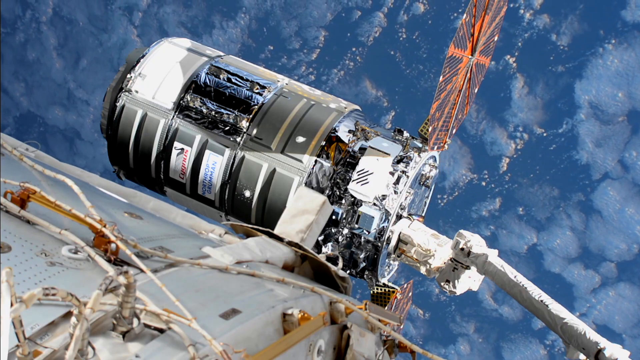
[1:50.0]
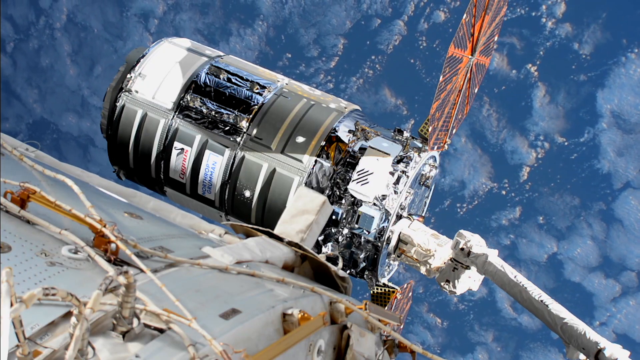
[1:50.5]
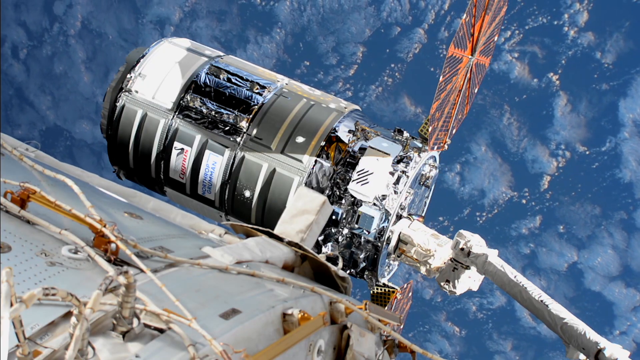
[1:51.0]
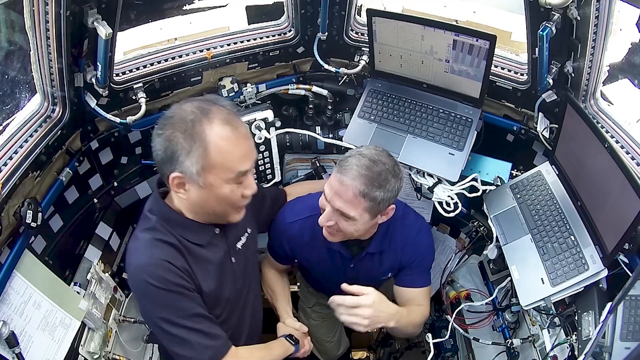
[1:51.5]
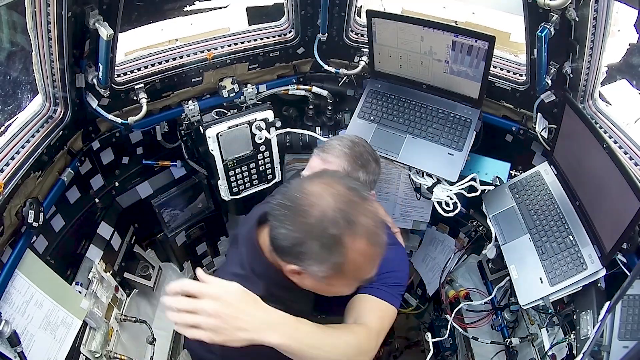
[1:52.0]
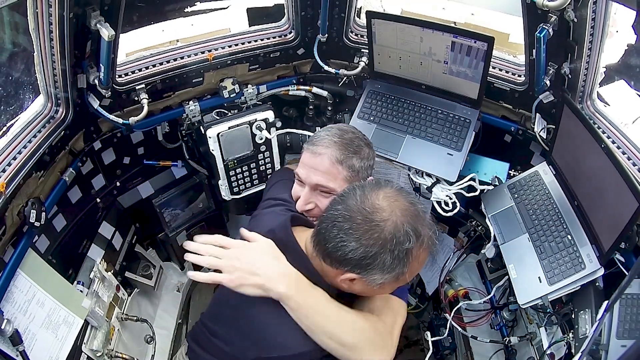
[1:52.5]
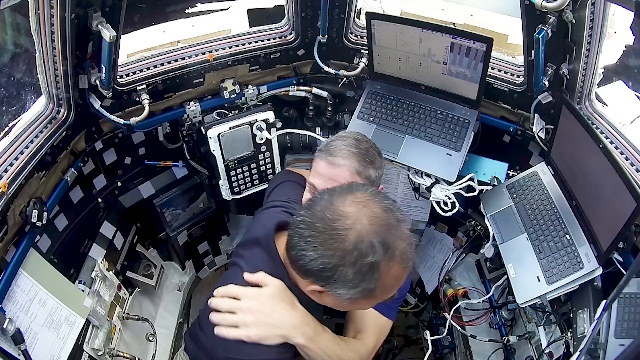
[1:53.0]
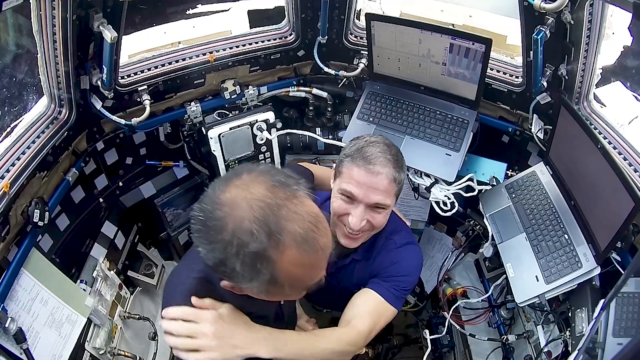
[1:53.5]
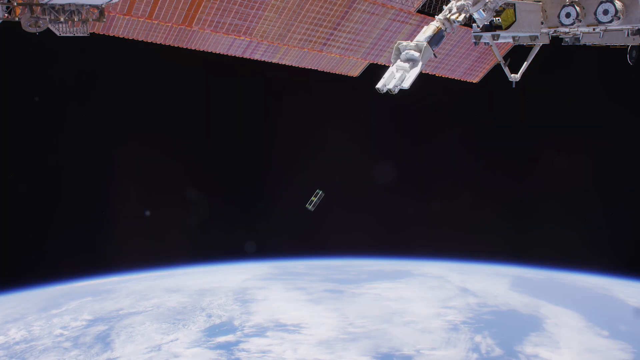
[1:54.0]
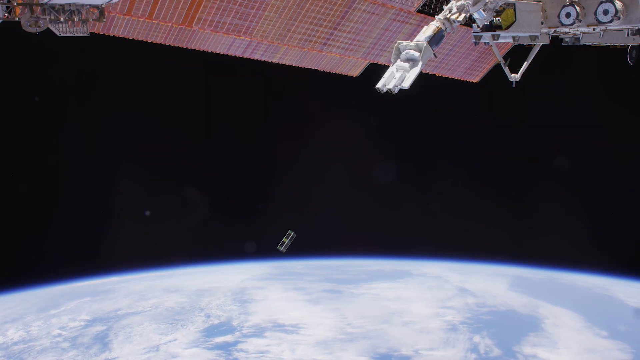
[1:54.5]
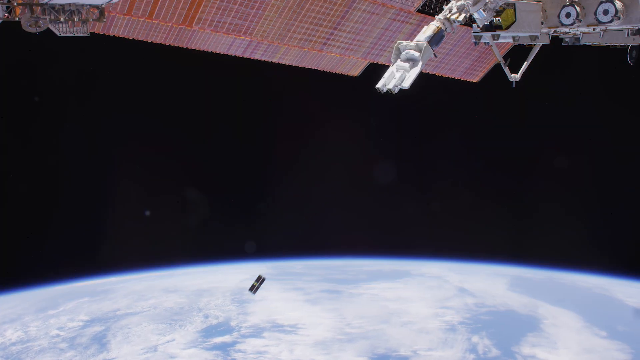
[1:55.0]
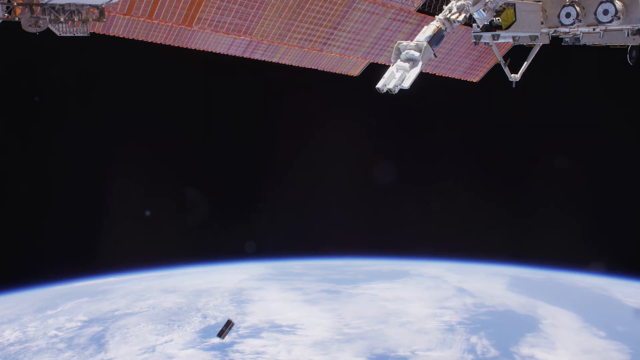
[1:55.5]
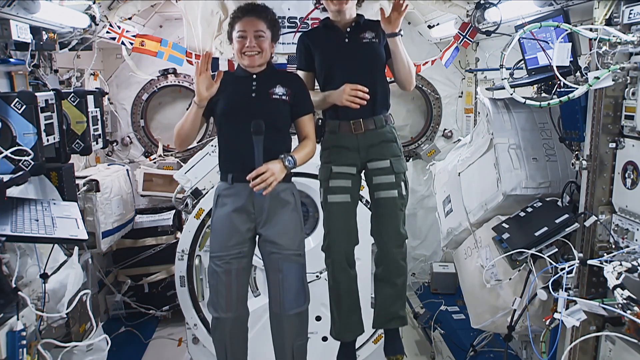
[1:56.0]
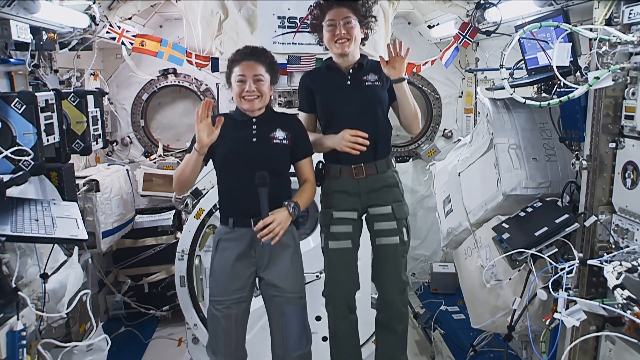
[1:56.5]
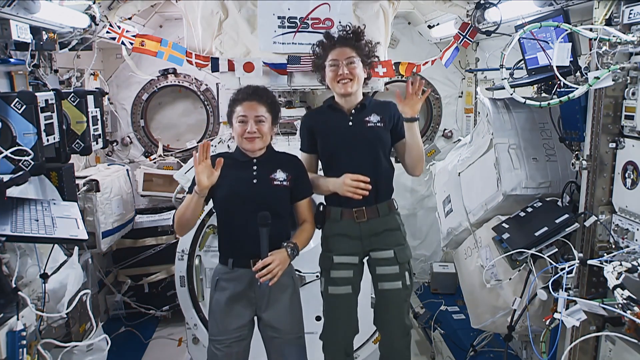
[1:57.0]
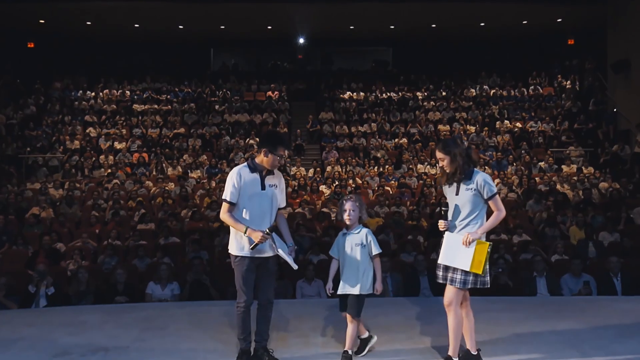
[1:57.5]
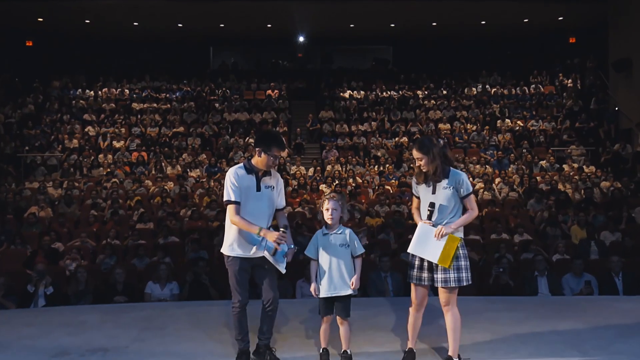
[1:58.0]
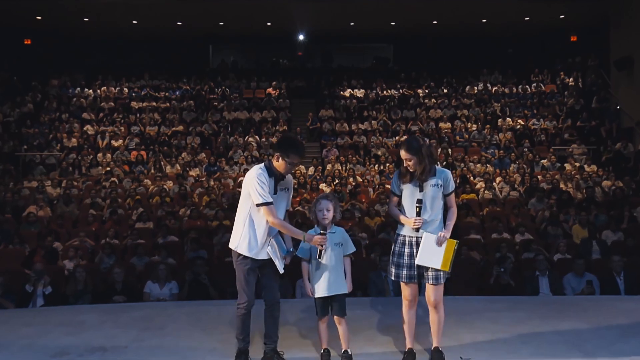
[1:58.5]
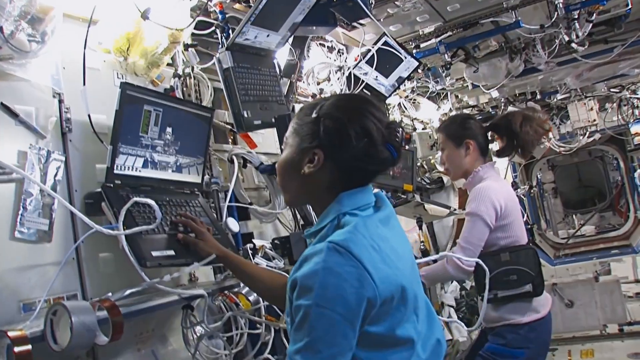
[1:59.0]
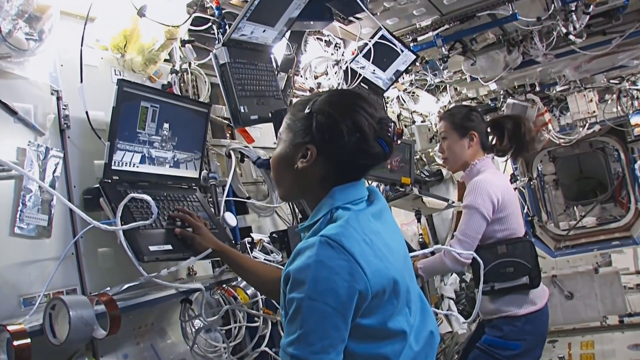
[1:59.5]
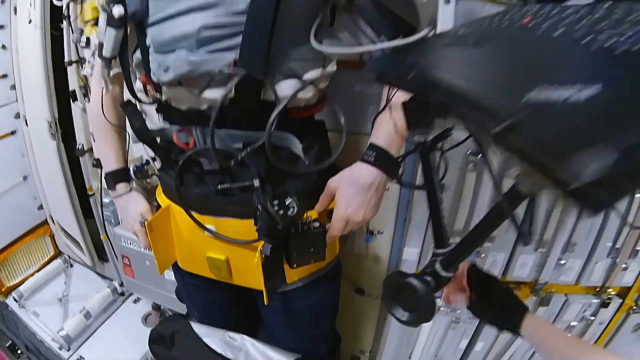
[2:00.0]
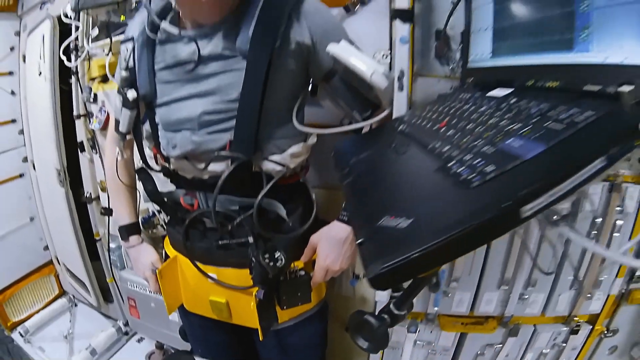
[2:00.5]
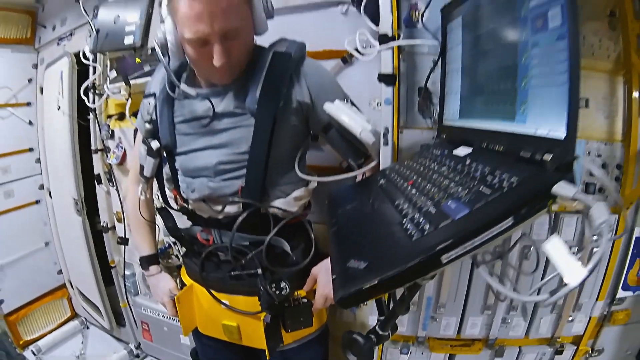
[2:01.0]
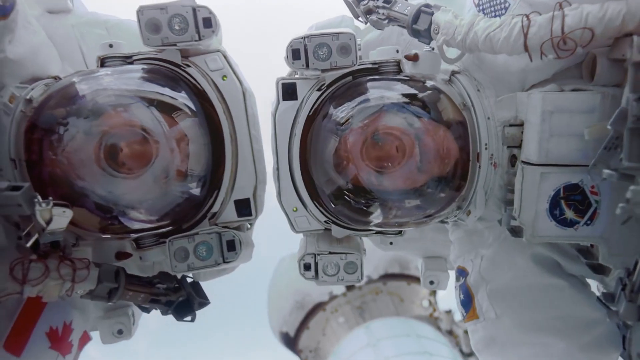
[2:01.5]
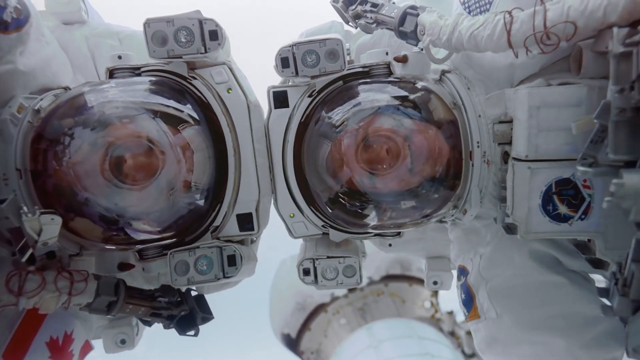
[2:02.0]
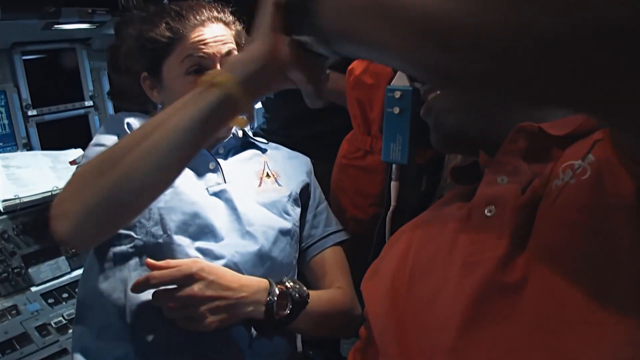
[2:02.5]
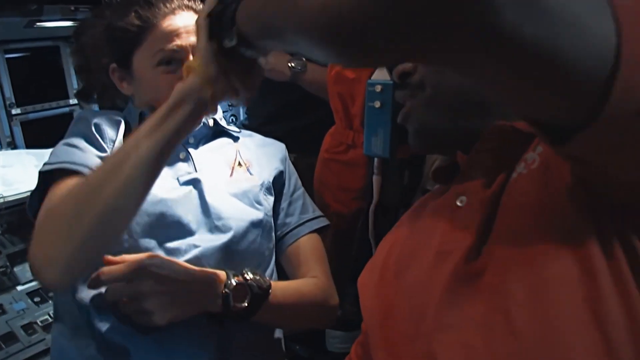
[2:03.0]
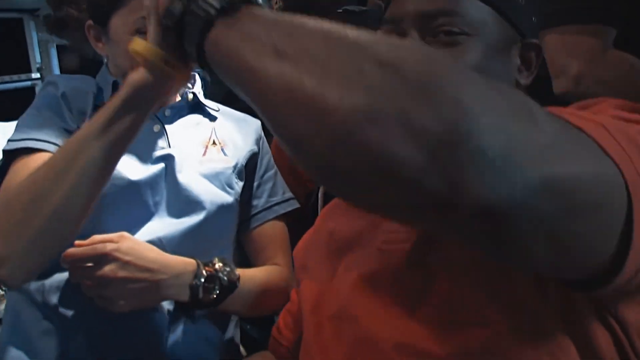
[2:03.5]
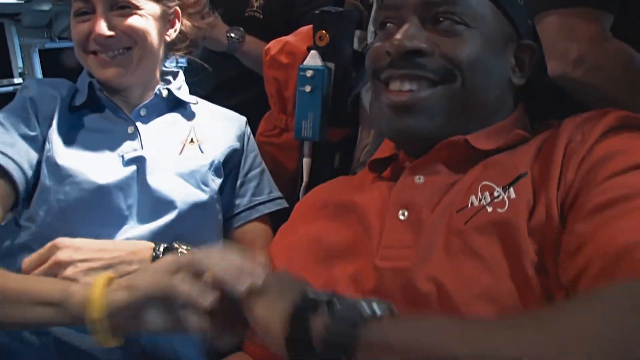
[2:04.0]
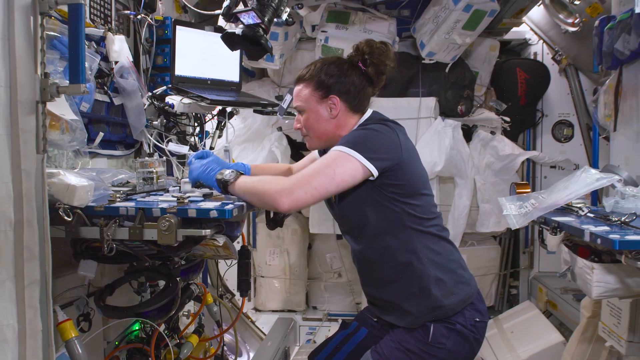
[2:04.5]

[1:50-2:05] Various scenes appear, some on the space station and some back on Earth, showing different astronauts in various settings. Much of it looks congratulatory: in a few scenes people wave hello, hug, say thank you, and congratulate each other. Some scenes look down at the Earth, where equipment can be seen being shot back down to Earth. In one scene, kids stand in front of a large auditorium of people, perhaps in a setting where kids are being trained or a space camp-style setting. Various astronauts also use equipment on the space station.